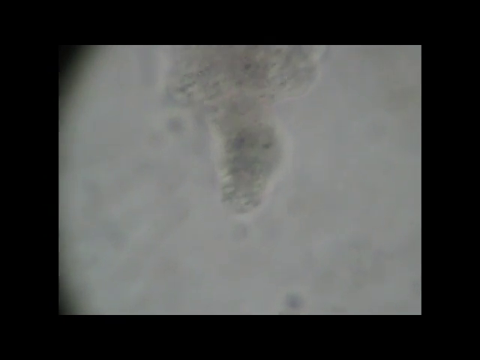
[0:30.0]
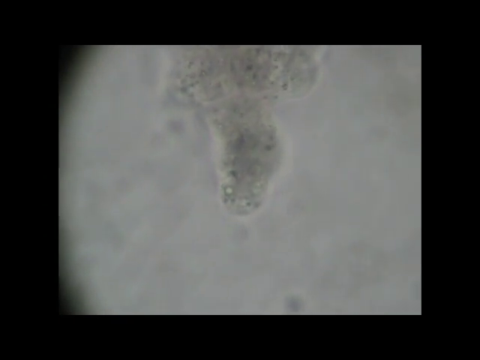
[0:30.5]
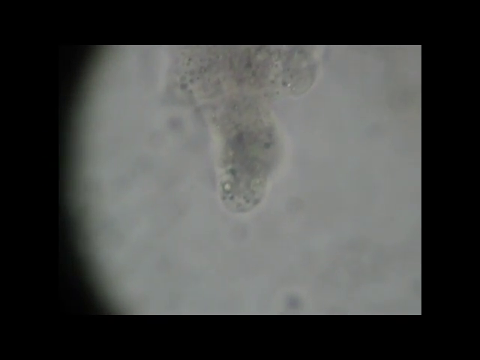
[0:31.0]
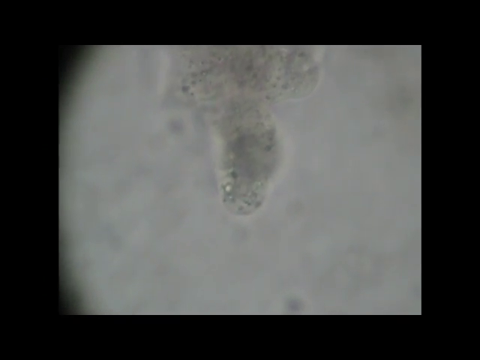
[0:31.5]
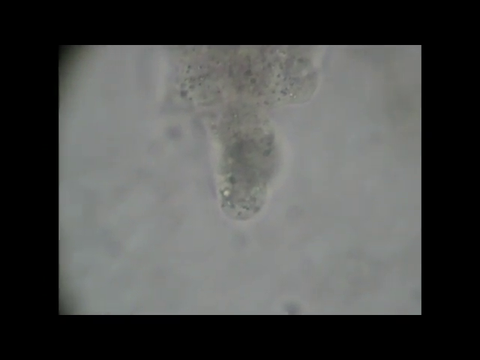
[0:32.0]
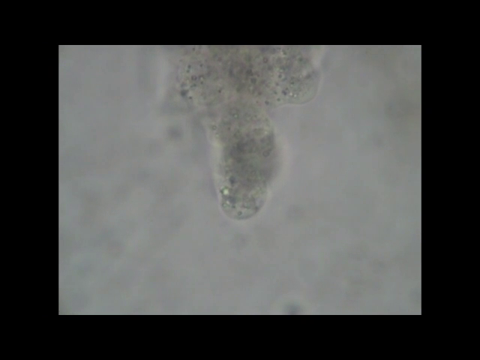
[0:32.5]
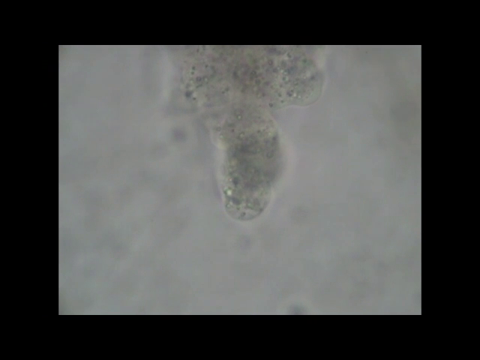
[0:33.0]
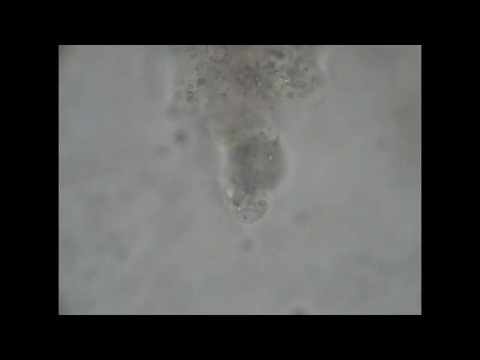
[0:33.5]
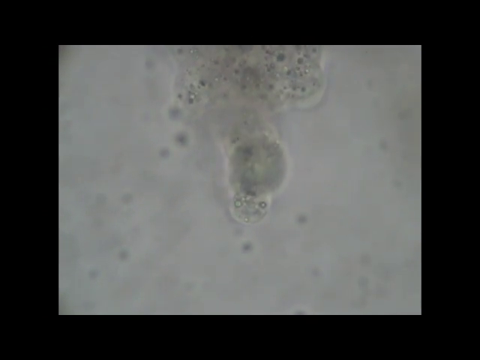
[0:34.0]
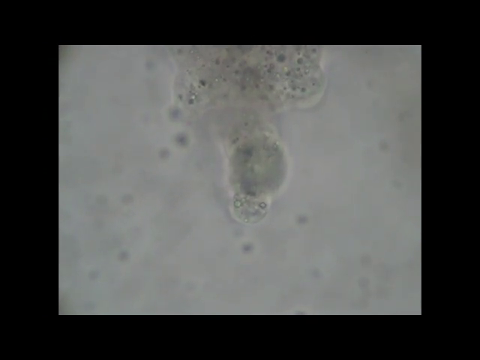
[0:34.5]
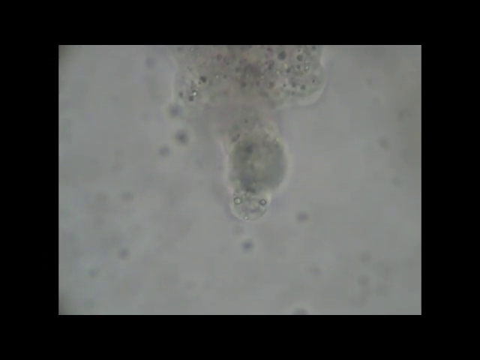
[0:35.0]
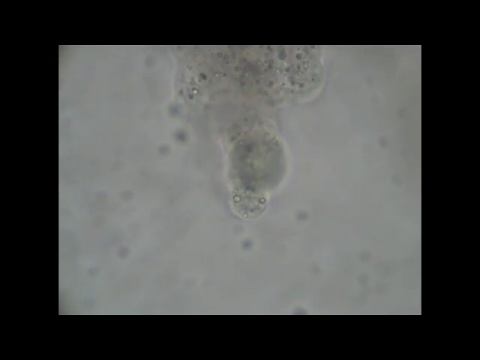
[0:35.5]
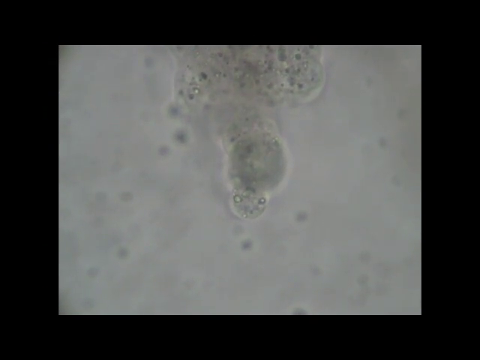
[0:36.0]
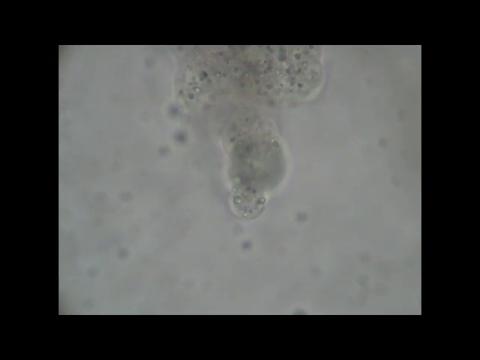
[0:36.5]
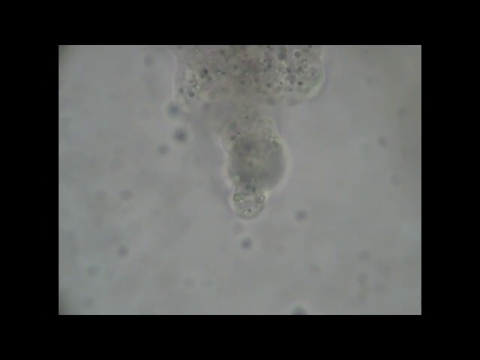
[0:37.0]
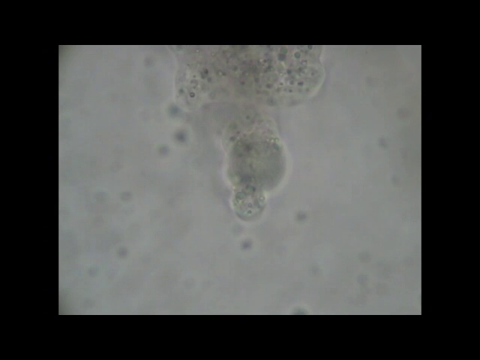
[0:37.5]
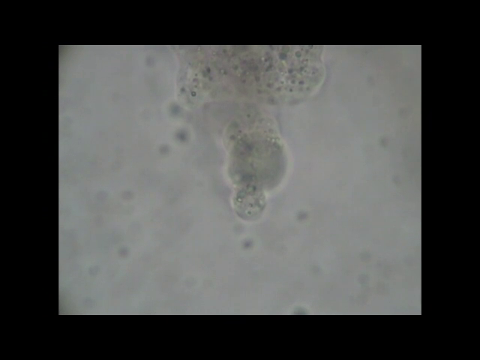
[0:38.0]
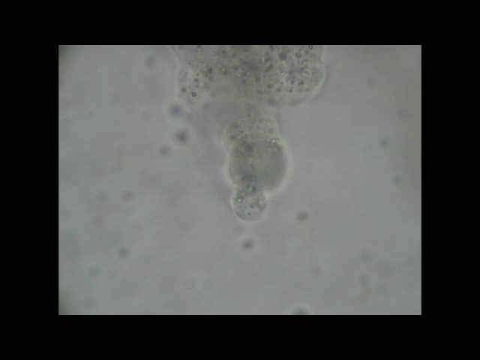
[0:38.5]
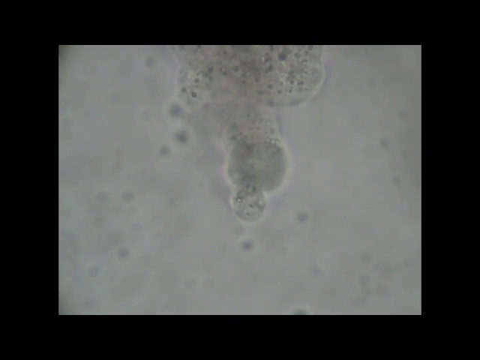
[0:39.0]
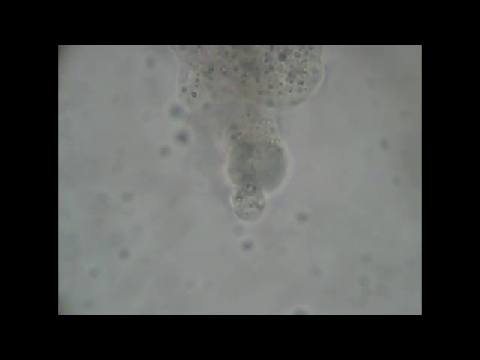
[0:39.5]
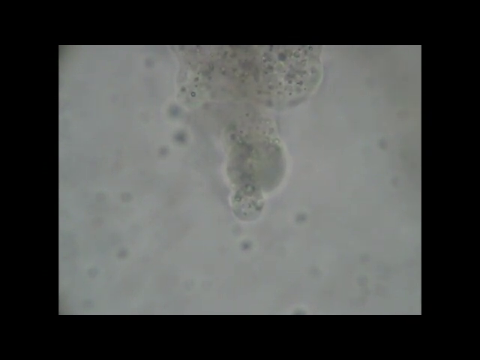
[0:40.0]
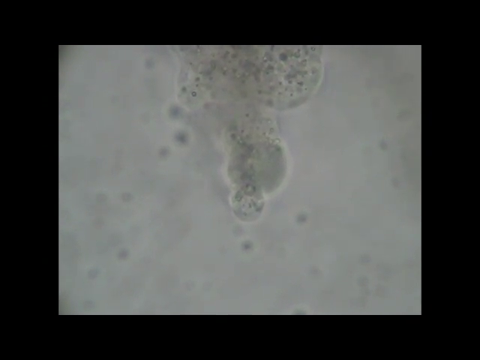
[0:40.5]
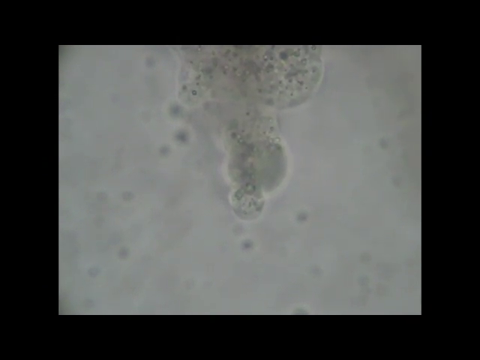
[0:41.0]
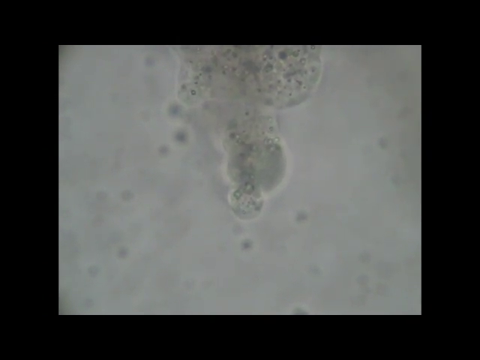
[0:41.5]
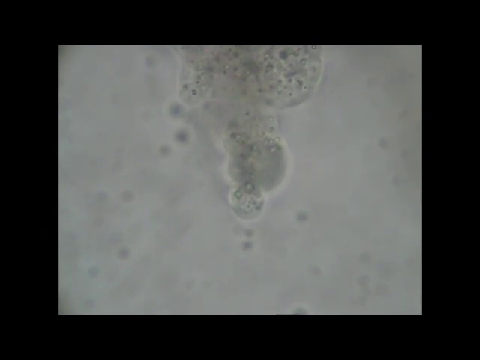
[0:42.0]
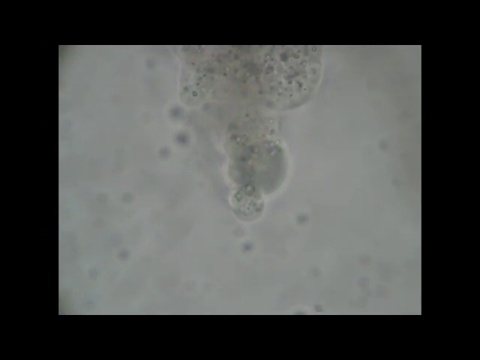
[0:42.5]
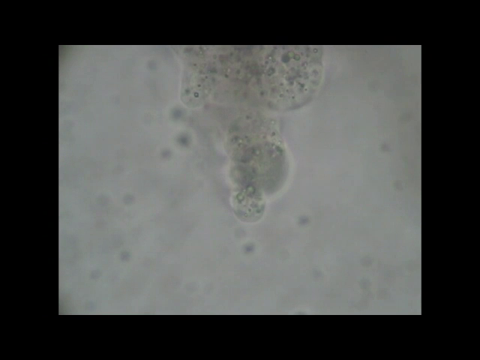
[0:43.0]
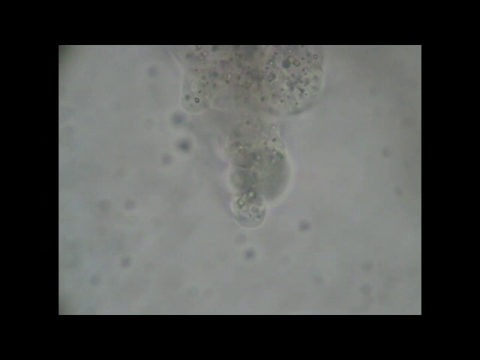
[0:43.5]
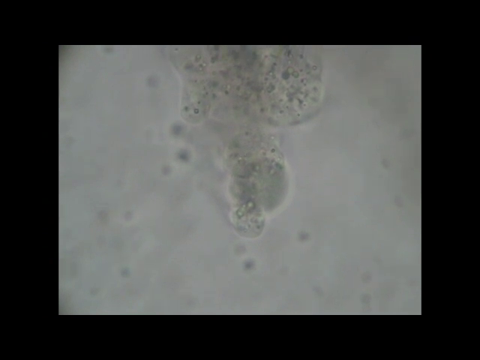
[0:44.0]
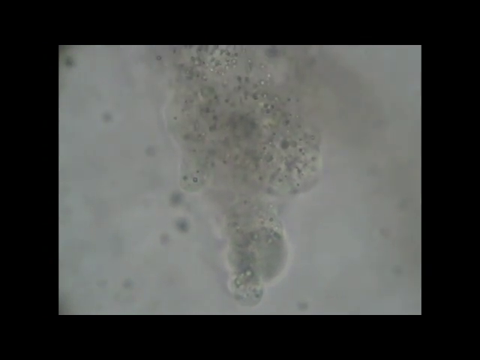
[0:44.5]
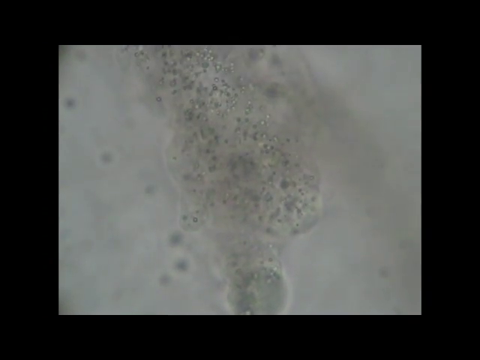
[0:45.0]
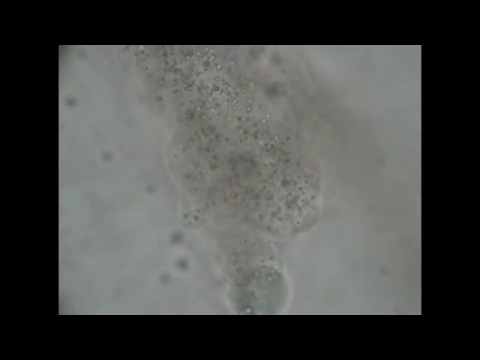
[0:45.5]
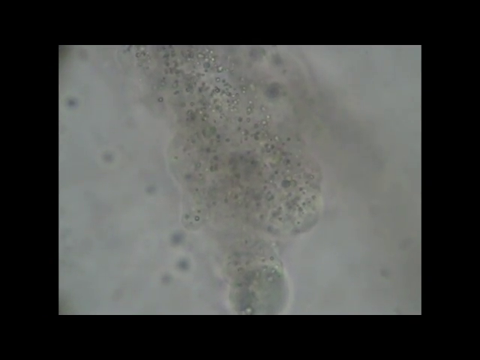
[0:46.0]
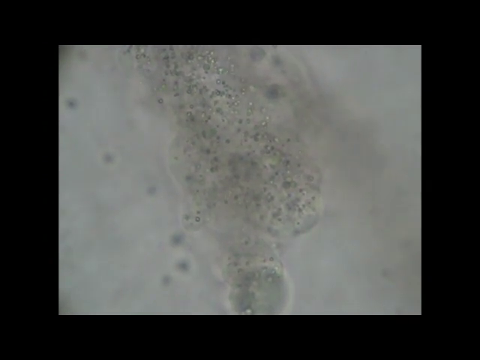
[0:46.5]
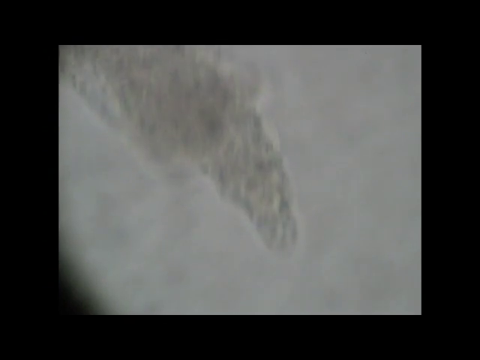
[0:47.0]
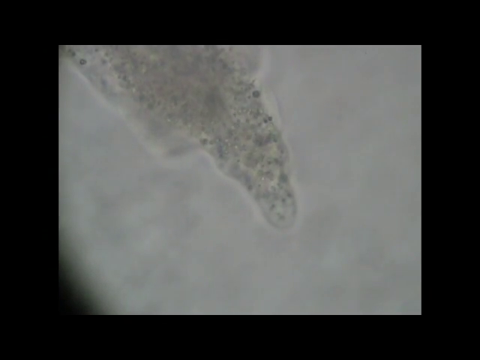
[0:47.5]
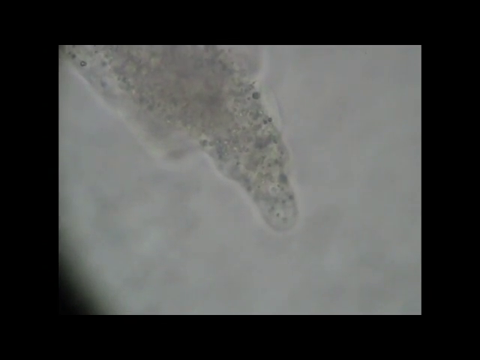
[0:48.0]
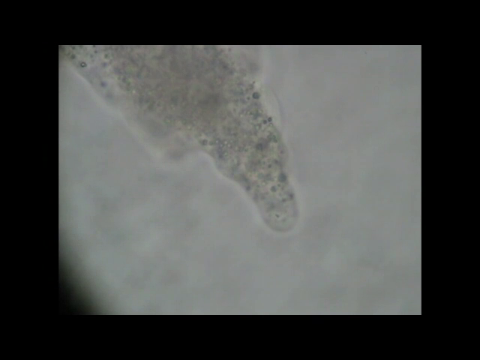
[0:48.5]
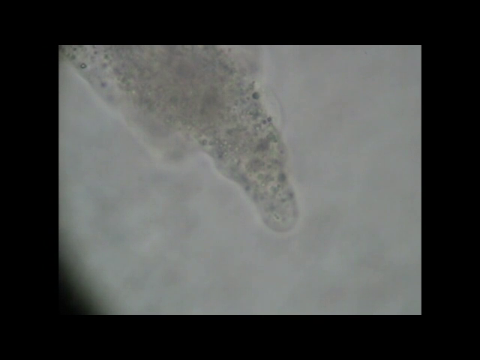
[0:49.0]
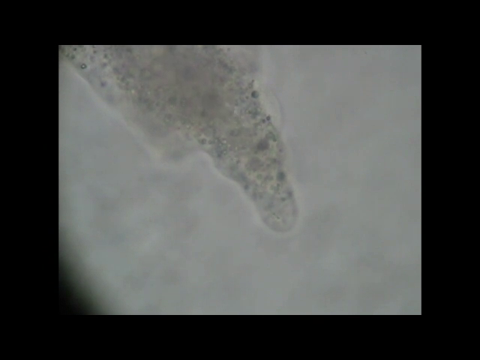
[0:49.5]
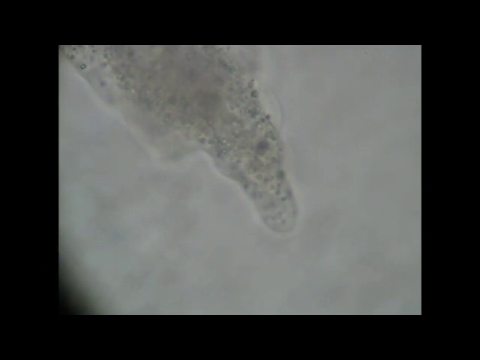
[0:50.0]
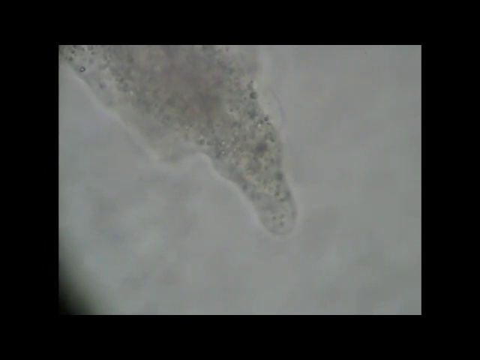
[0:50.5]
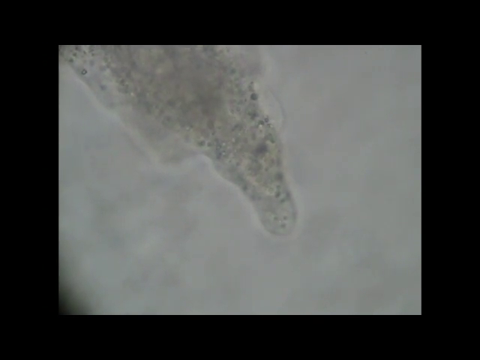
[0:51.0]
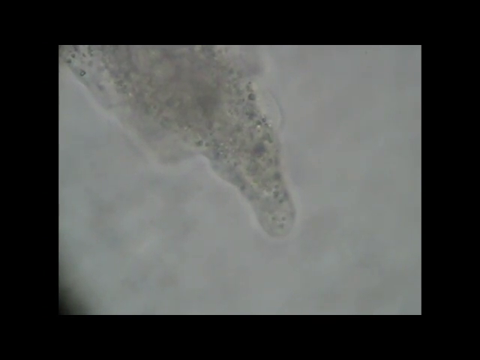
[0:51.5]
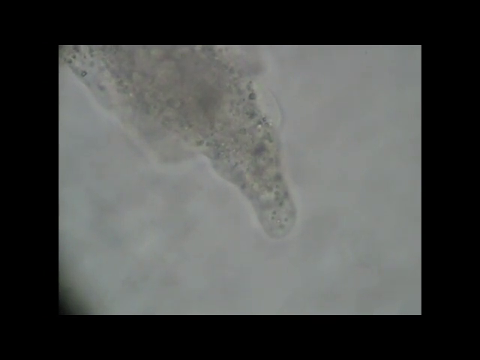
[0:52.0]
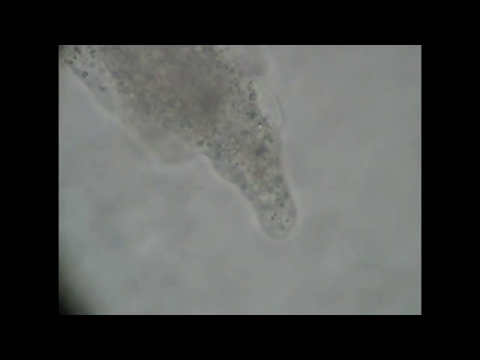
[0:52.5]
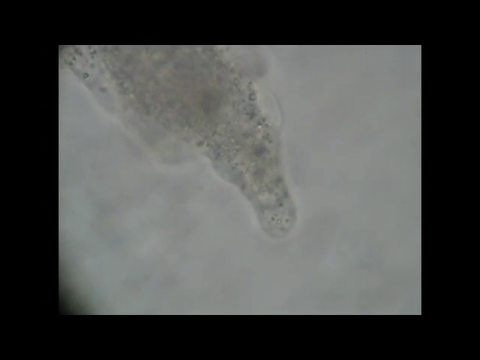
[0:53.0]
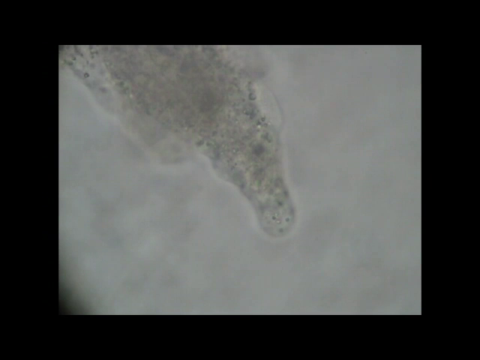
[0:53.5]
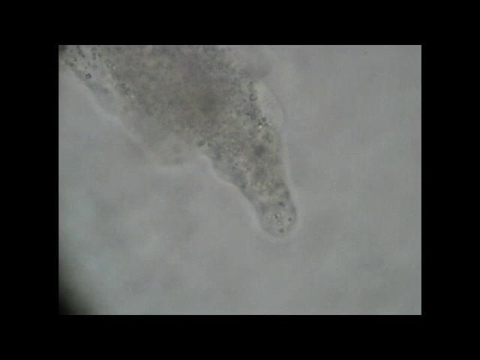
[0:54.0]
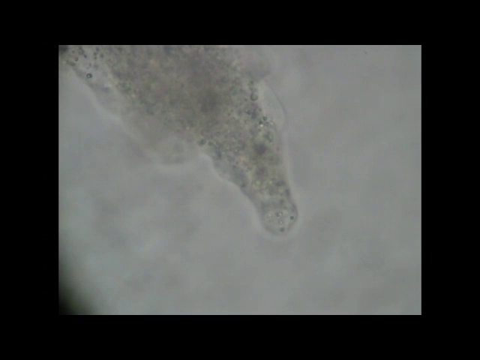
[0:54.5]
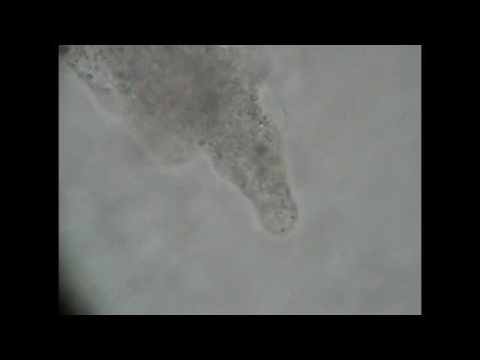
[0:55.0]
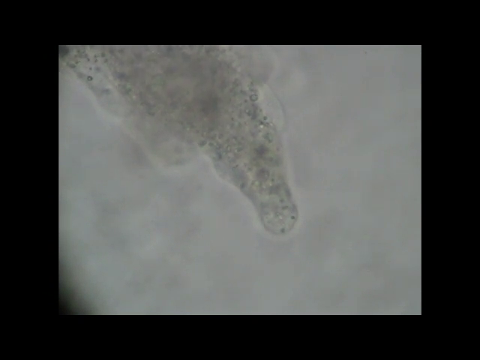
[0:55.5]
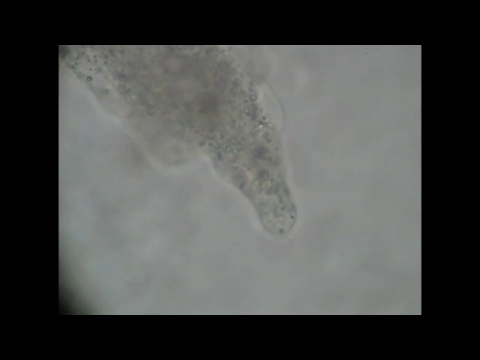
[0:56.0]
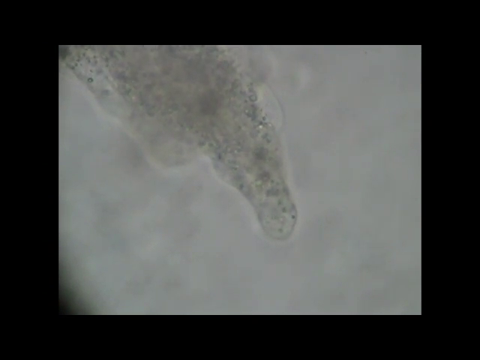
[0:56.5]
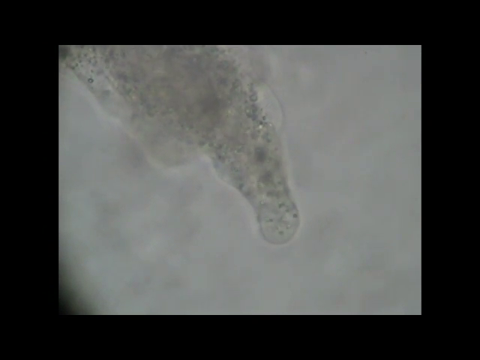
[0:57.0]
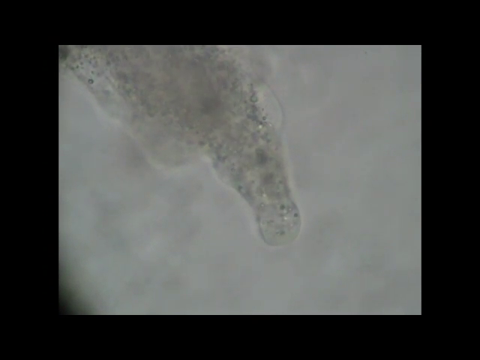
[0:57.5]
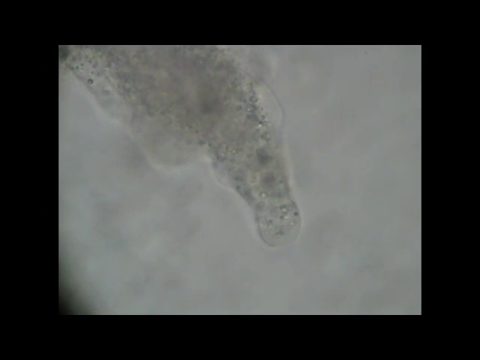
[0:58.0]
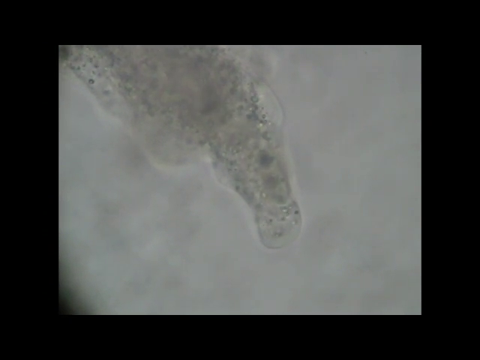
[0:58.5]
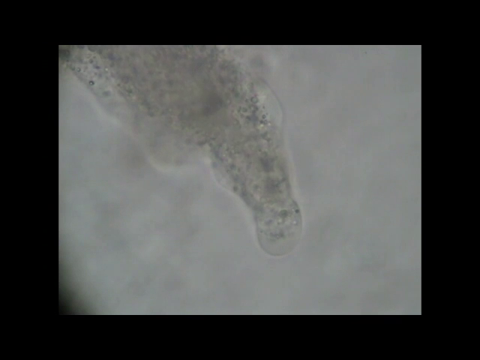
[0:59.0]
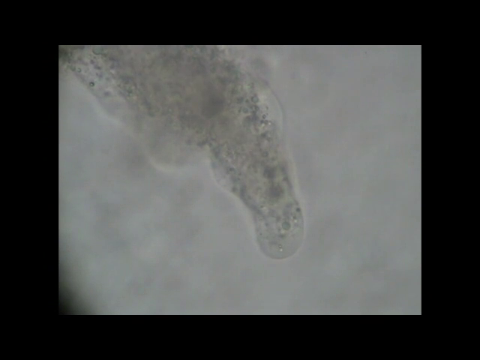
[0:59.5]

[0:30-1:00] The cluster of cells, first located in the top center of the screen, is either a group of cells or some sort of microscopic organism, and it moves toward the bottom of the screen. It moves almost like a centipede, not as smaller individual cells but as a group of cells clustered together. The view looks black and white, as if under some sort of microscope recording the movement. Smaller particles move across the screen. The image, or perhaps the microscope, then moves up to show other portions of the group, giving a better view. It does look like an organism, with smaller clusters of cells contained within a translucent microscopic body.